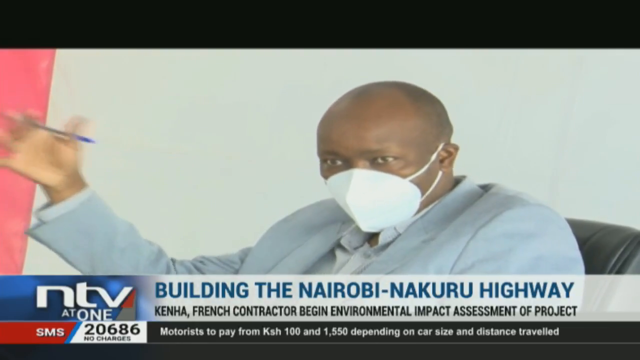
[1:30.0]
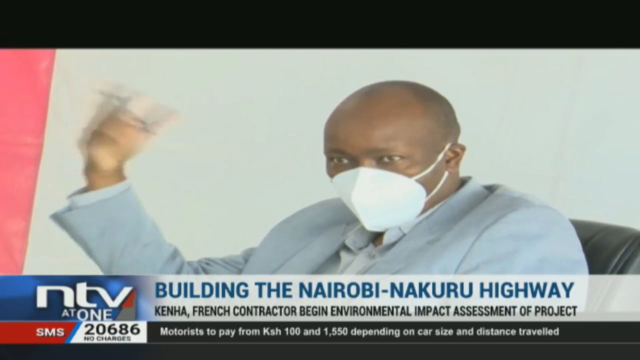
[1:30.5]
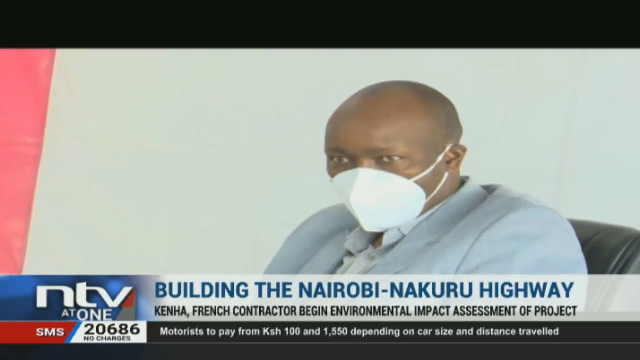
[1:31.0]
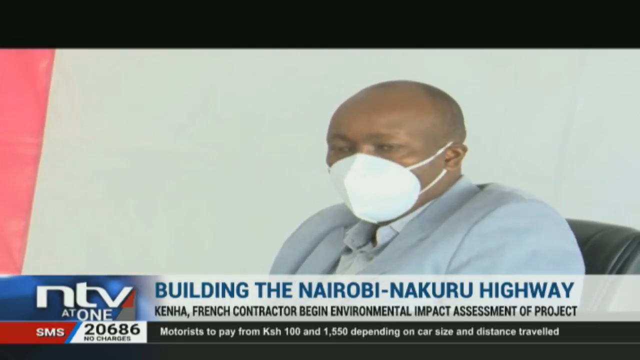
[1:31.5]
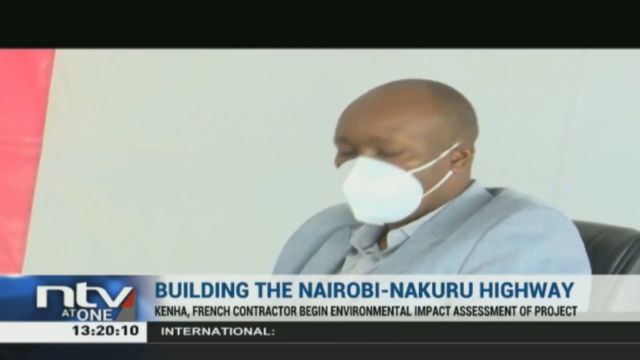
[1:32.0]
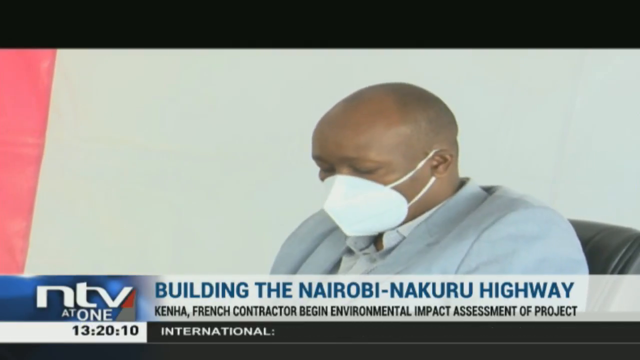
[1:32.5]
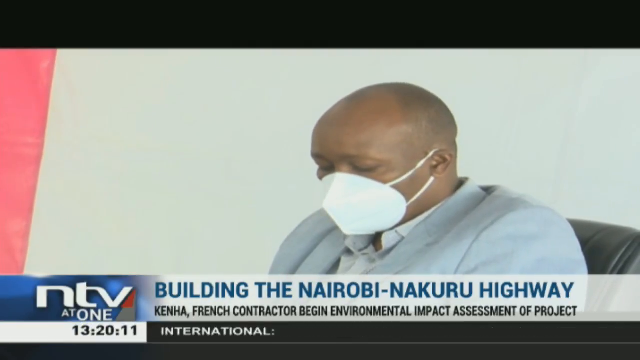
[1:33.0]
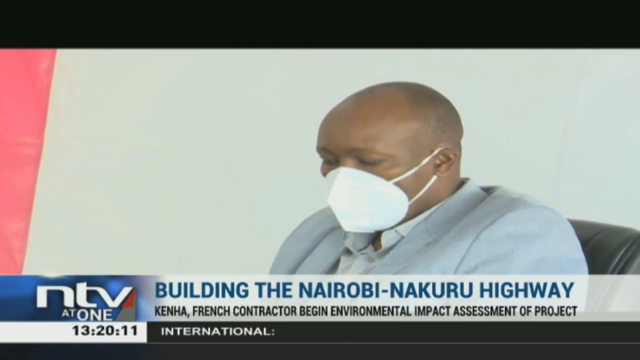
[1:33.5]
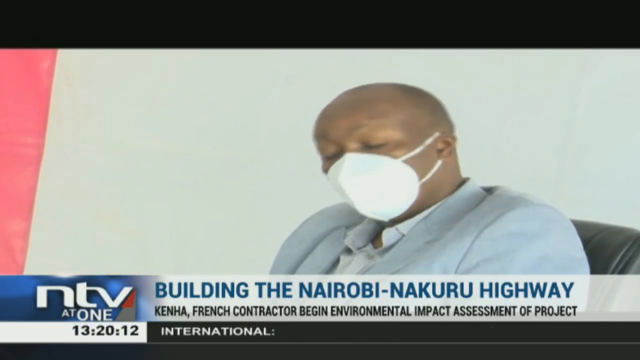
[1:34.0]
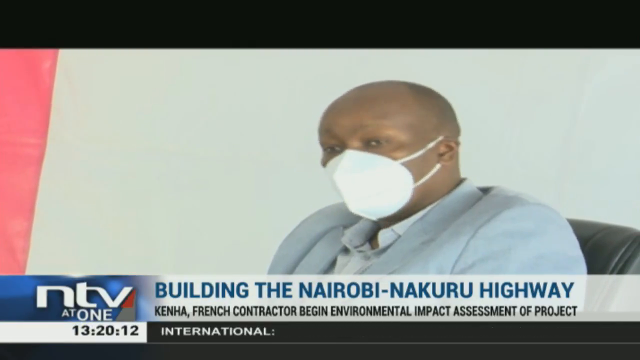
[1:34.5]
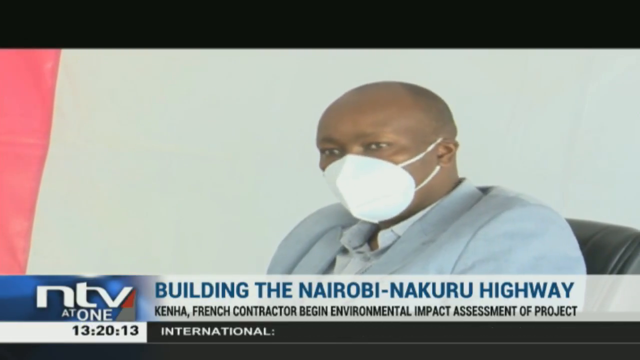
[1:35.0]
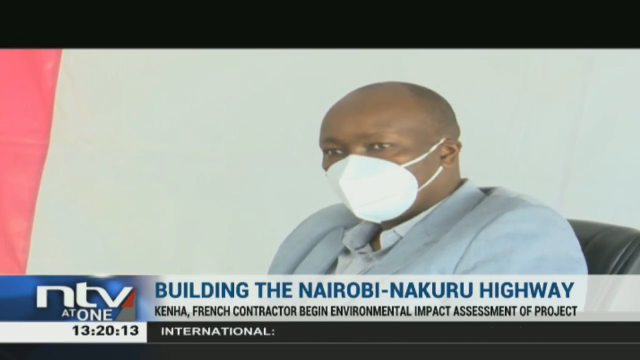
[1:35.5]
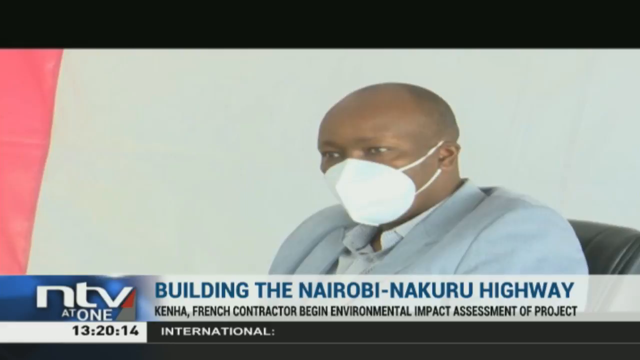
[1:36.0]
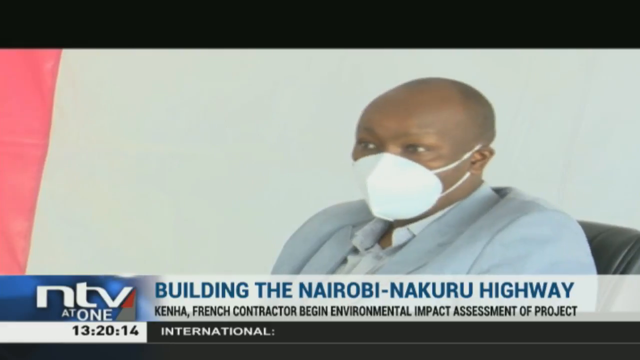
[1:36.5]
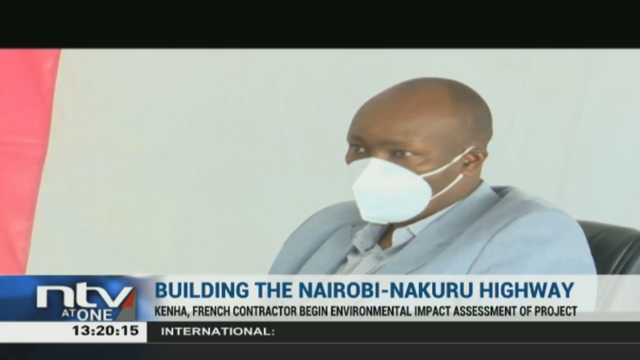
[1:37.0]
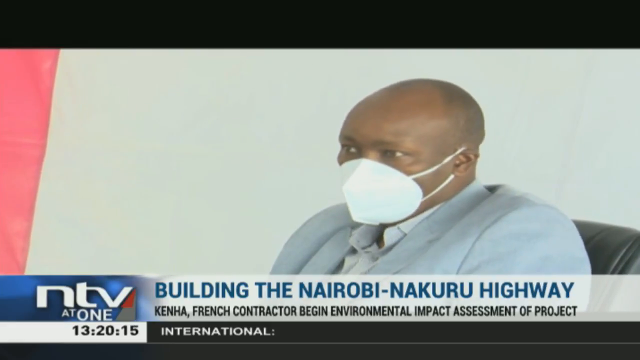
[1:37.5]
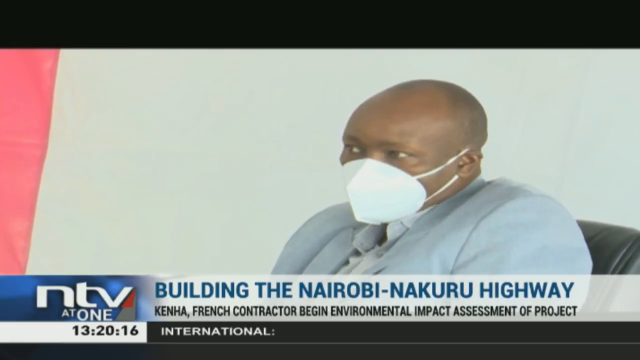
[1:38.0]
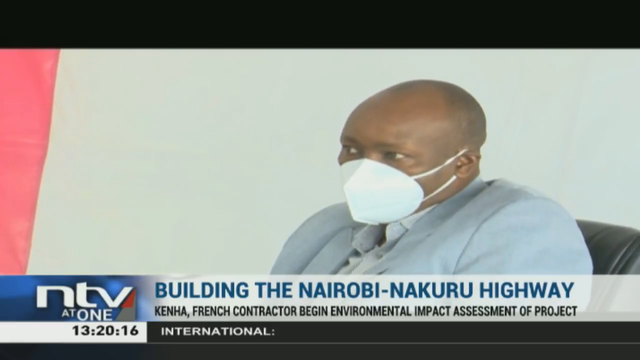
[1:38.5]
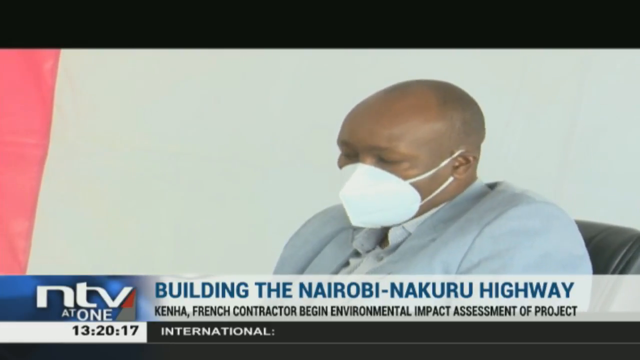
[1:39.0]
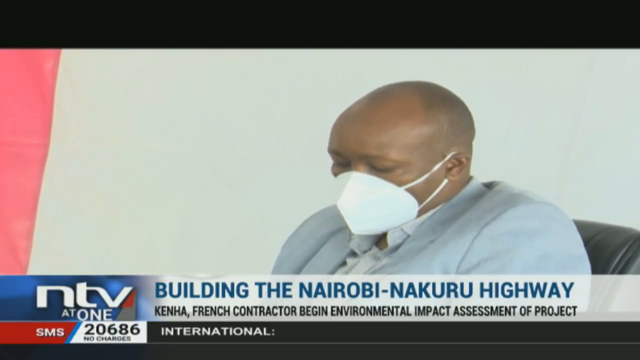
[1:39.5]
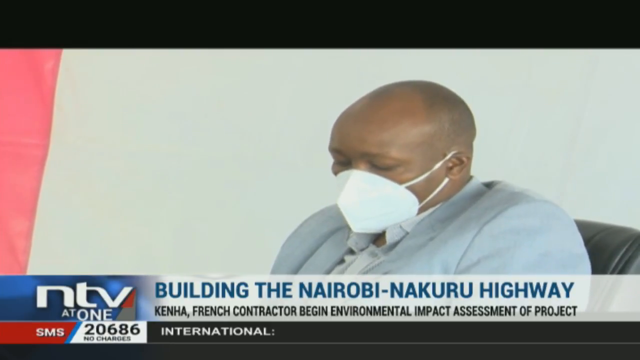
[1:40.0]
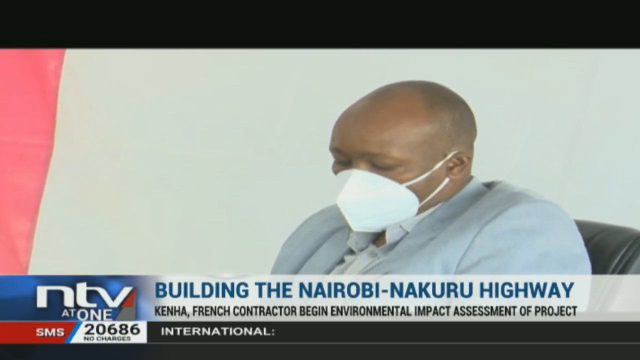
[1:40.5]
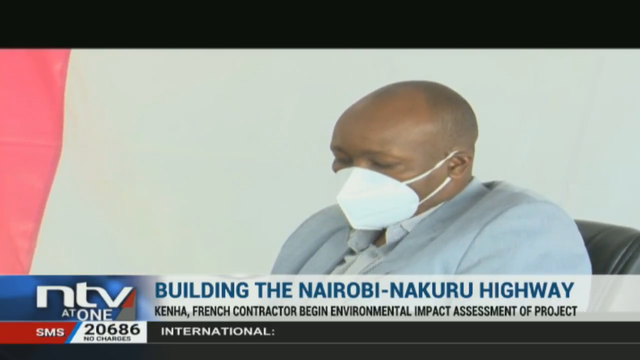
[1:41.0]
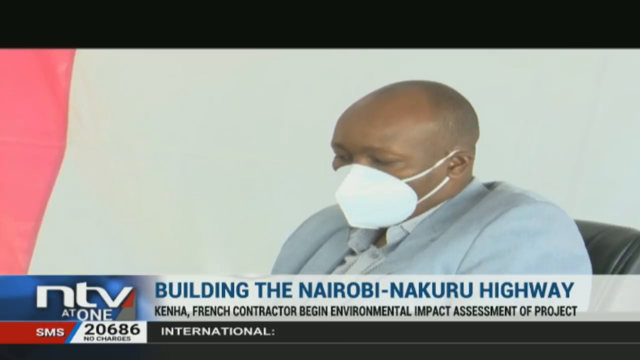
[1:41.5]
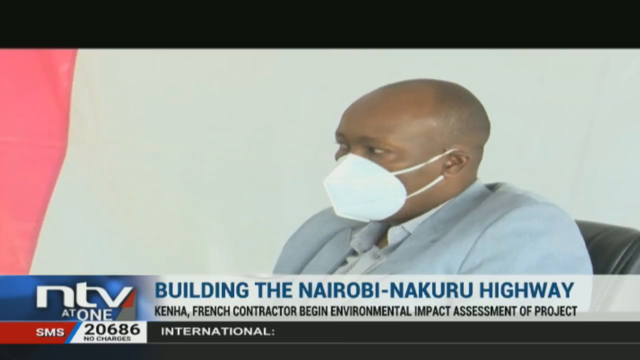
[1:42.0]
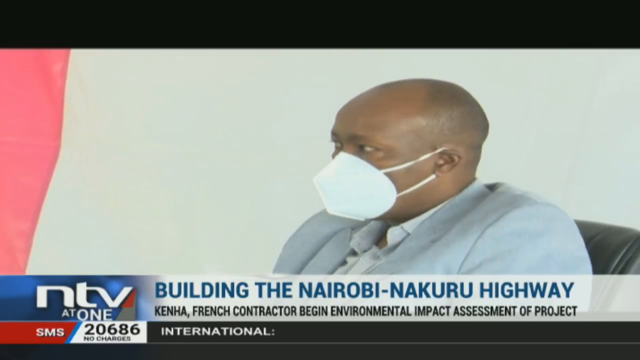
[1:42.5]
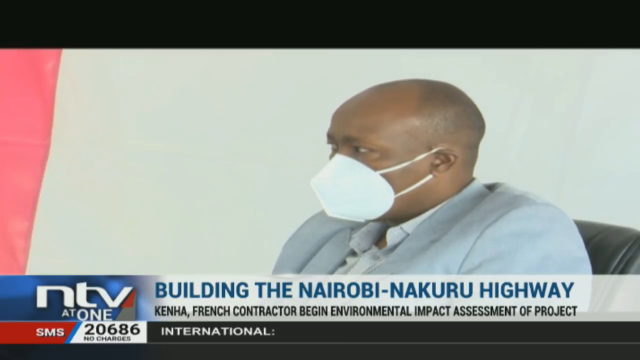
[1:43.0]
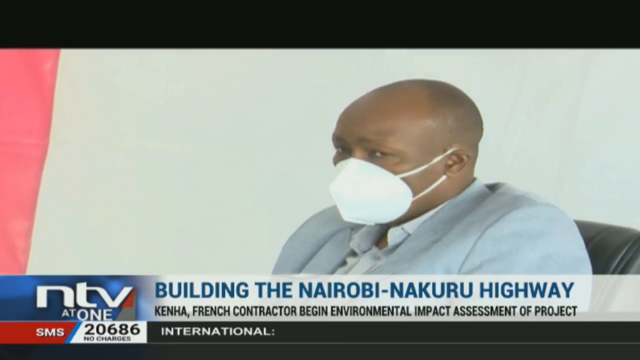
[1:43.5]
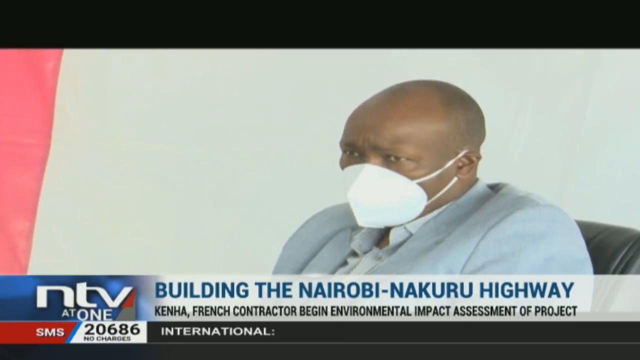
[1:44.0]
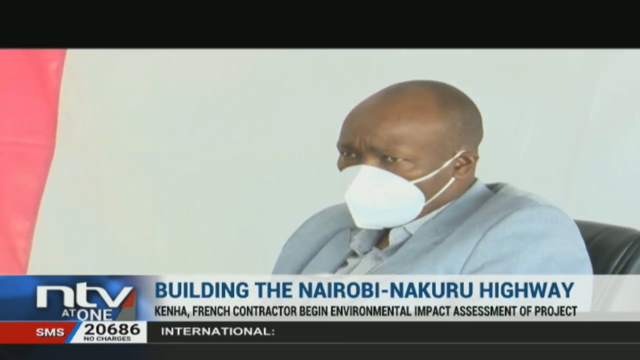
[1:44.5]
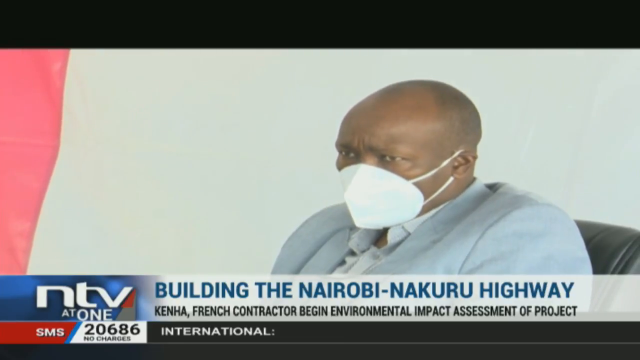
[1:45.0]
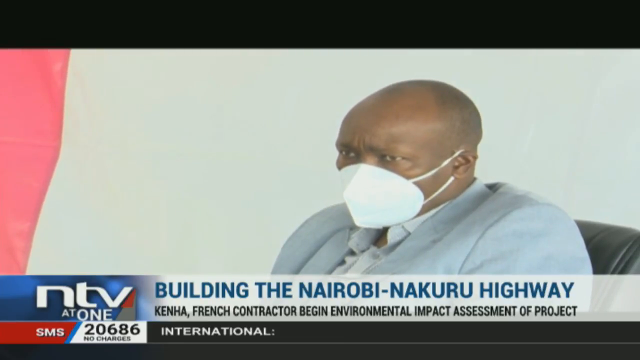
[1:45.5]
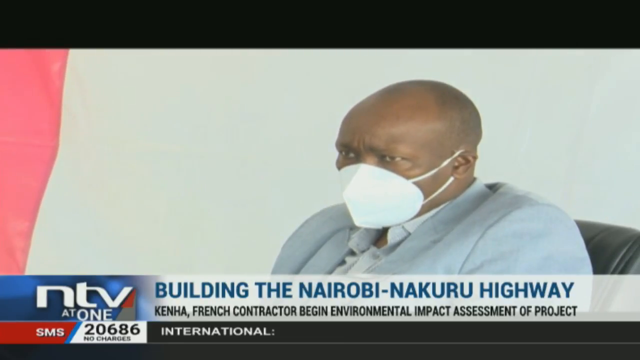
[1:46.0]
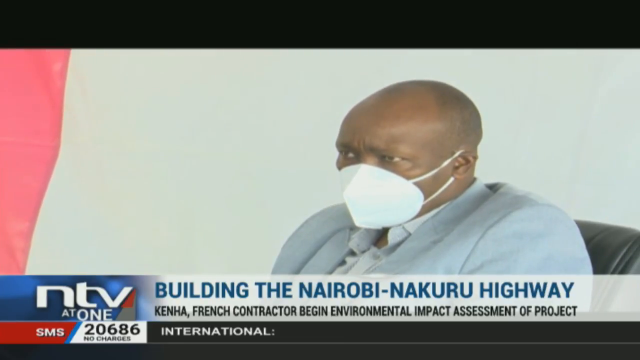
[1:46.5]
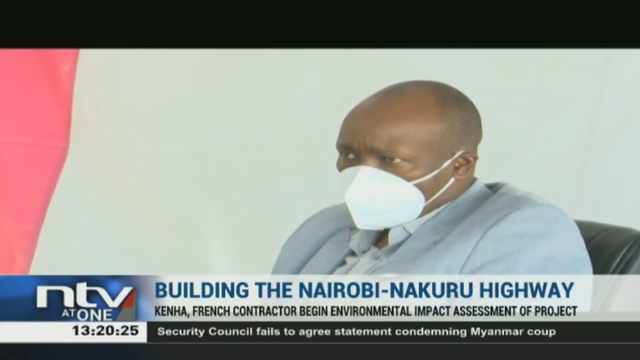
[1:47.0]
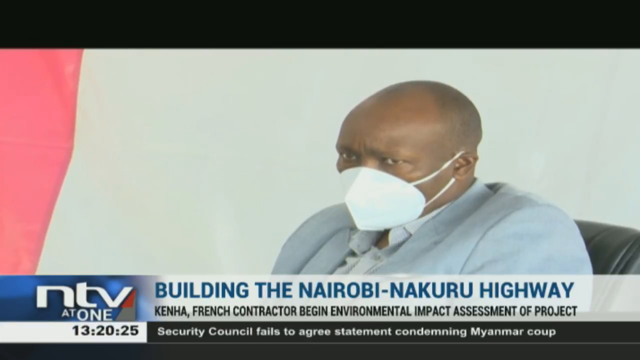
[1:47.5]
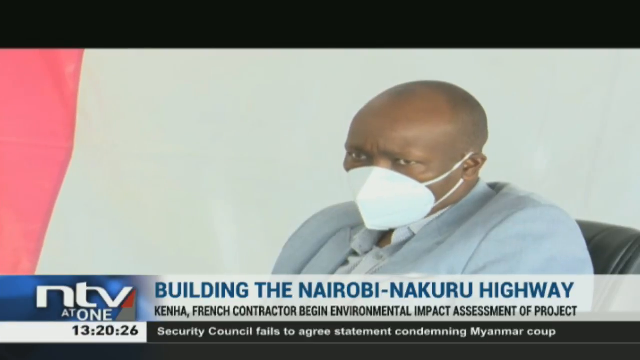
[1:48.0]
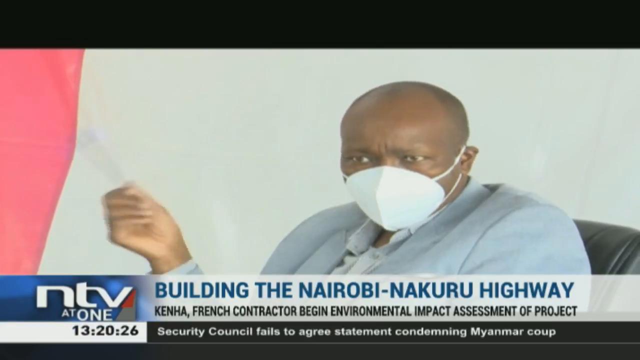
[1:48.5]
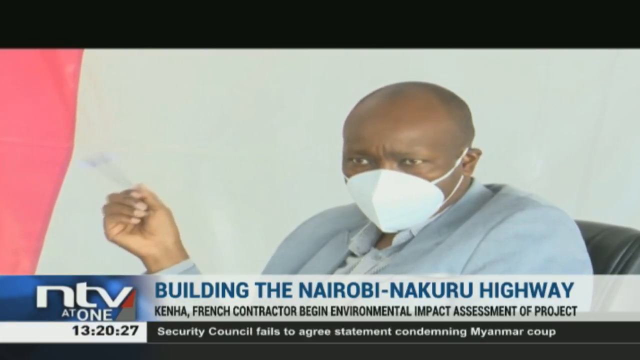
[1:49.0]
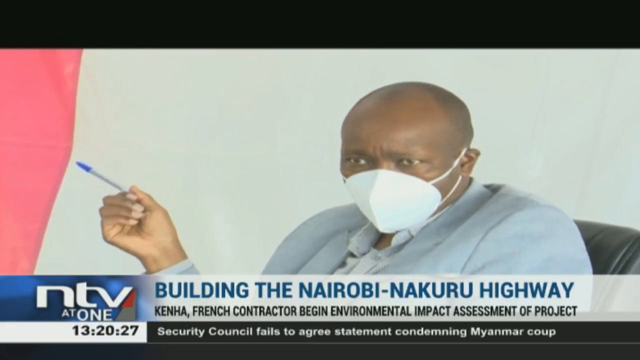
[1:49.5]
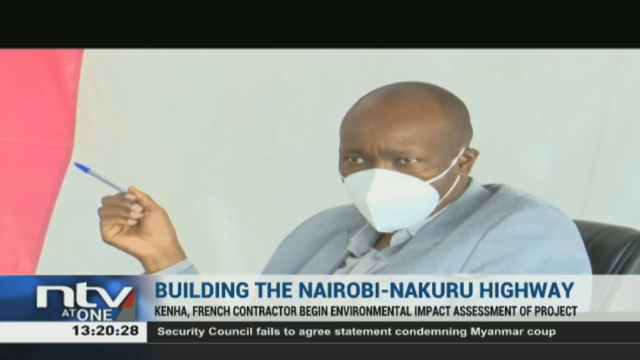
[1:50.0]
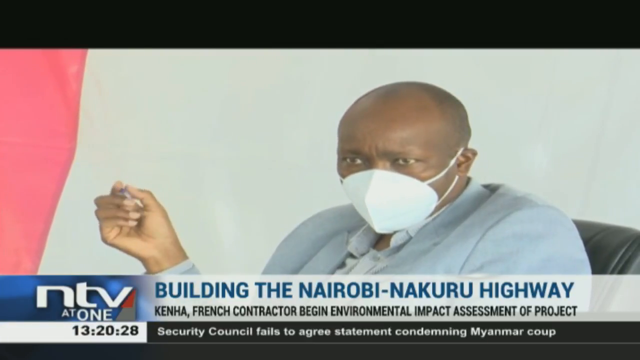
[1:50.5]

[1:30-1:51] The man in the light blue jacket, white shirt and white mask, almost bald, keeps speaking with no microphone in front of him. Part of some sort of reddish flag is visible to the left. He gestures with a blue ink pen as he speaks, casually and not overly emphatically. He is sitting in a grey, leather-like chair, against a stark white background. The text below him says "building the Nairobi Nakuru highway," with the subtitle "French contractor begin environmental impact assessment of project." The program is NTV1, and below that is the number "20686" and the words "no charges," possibly a way to text or follow it online.